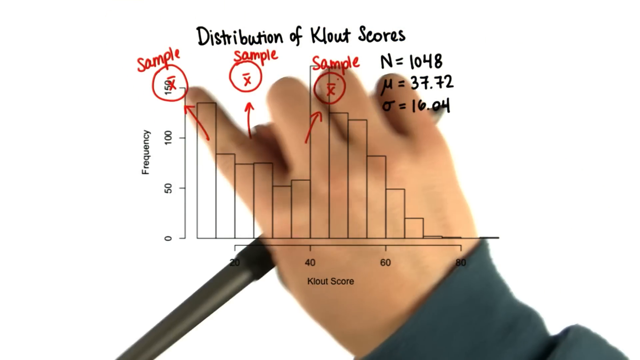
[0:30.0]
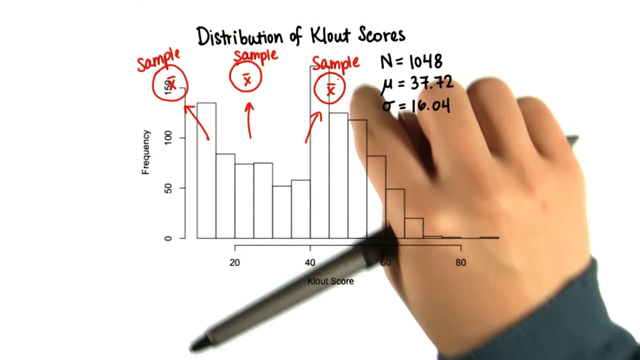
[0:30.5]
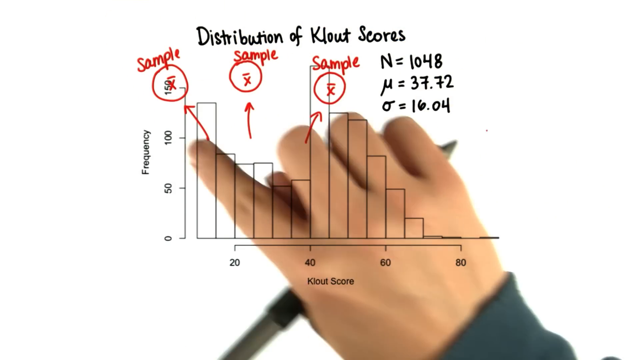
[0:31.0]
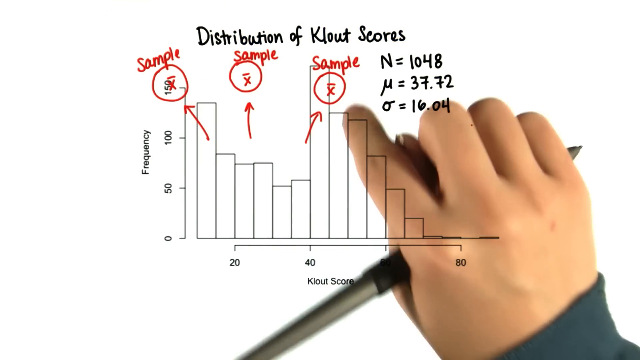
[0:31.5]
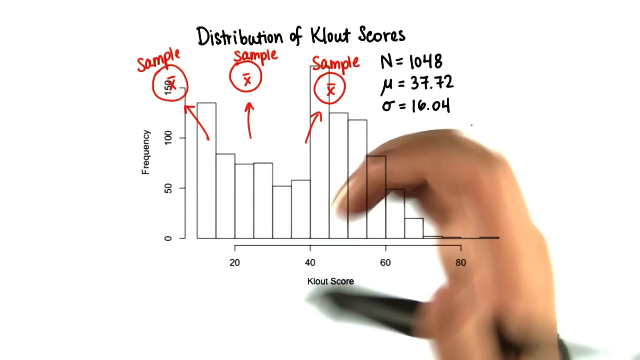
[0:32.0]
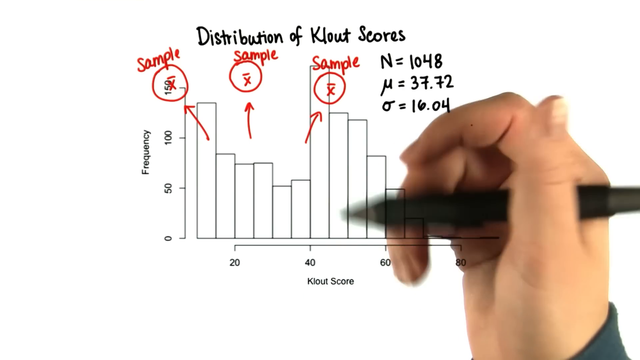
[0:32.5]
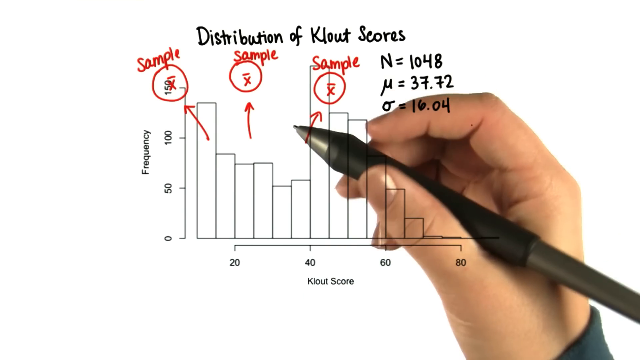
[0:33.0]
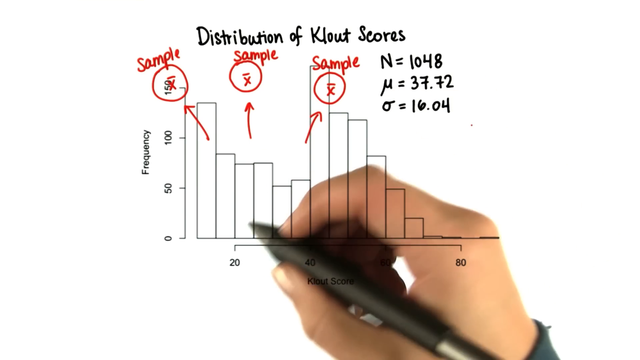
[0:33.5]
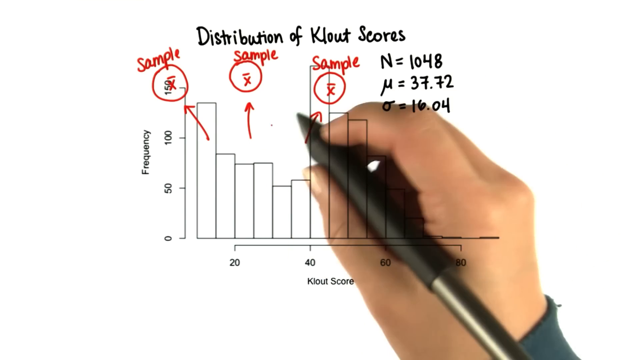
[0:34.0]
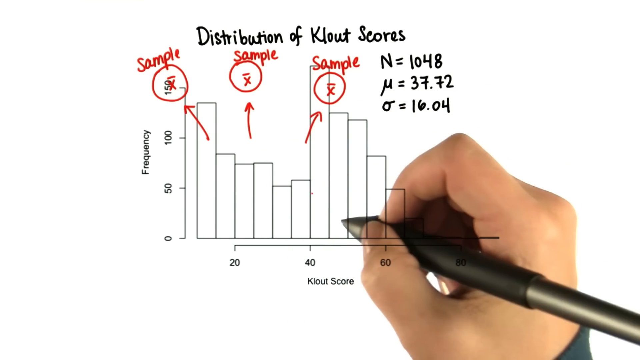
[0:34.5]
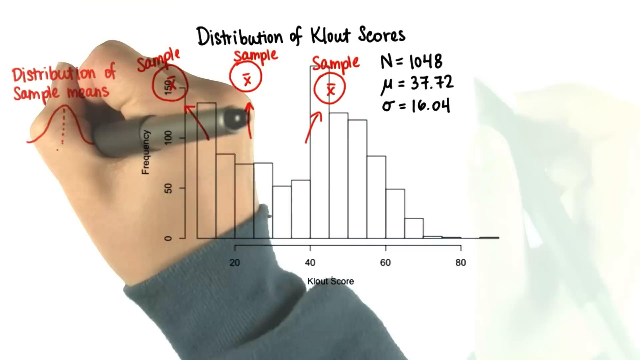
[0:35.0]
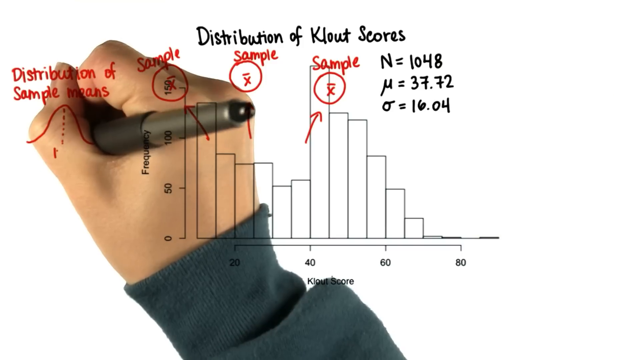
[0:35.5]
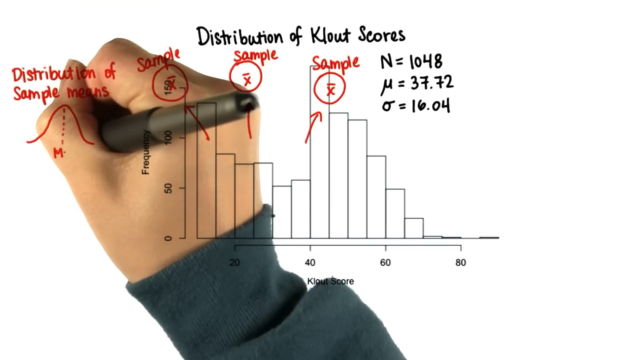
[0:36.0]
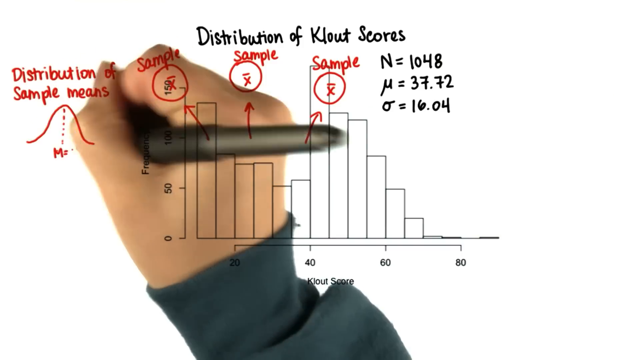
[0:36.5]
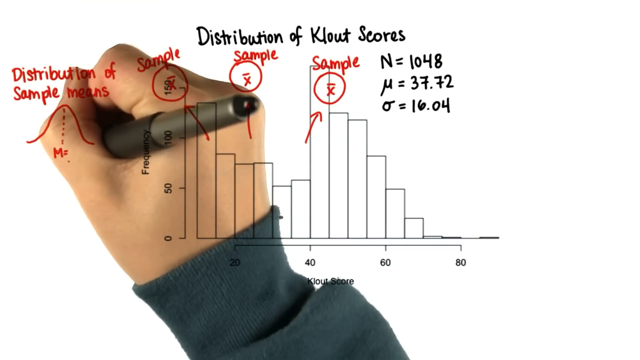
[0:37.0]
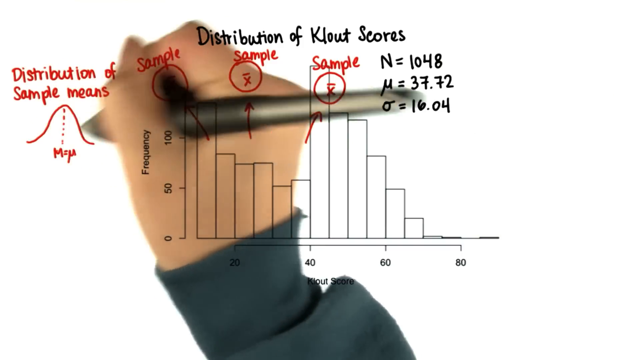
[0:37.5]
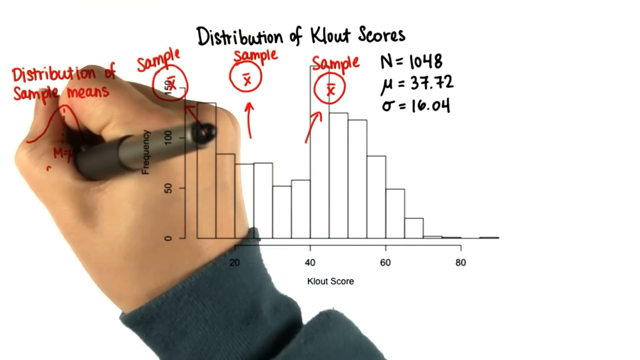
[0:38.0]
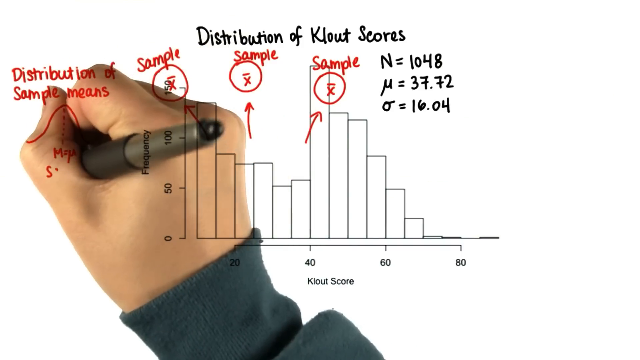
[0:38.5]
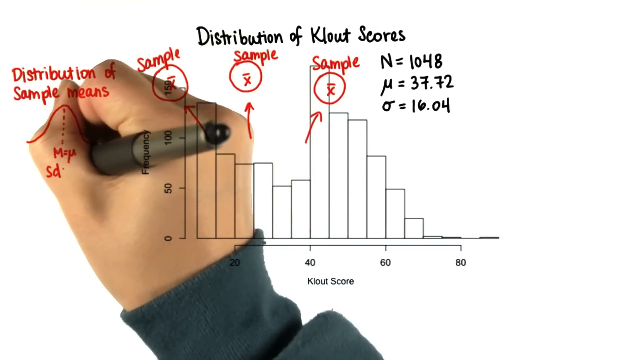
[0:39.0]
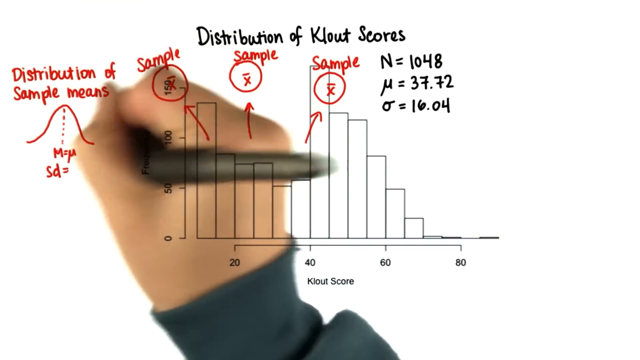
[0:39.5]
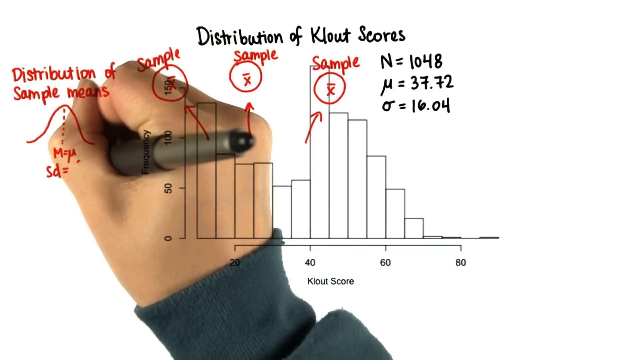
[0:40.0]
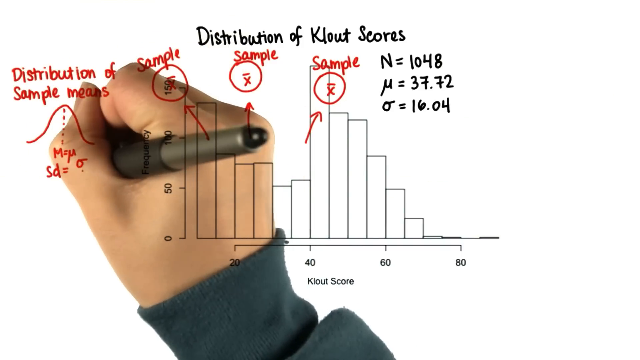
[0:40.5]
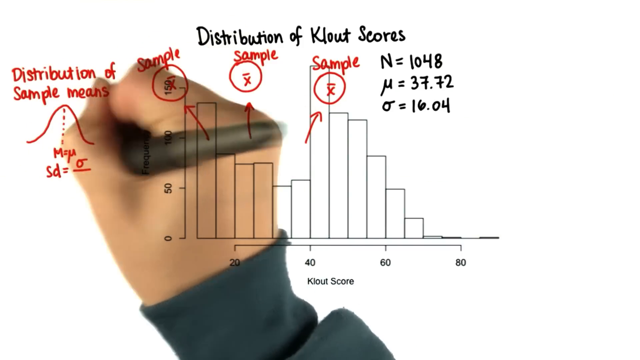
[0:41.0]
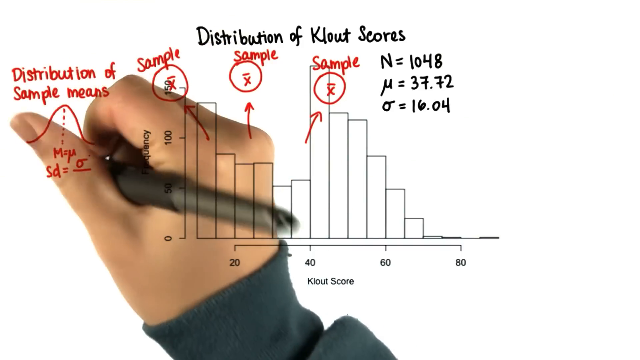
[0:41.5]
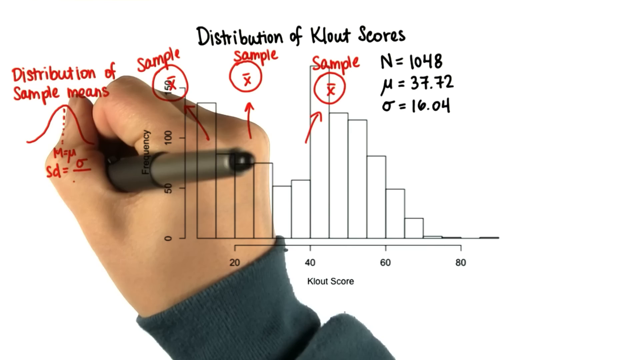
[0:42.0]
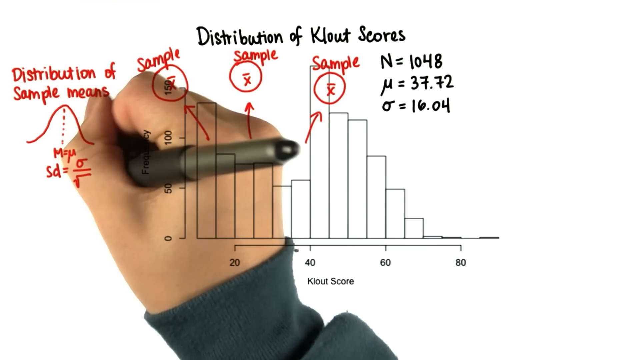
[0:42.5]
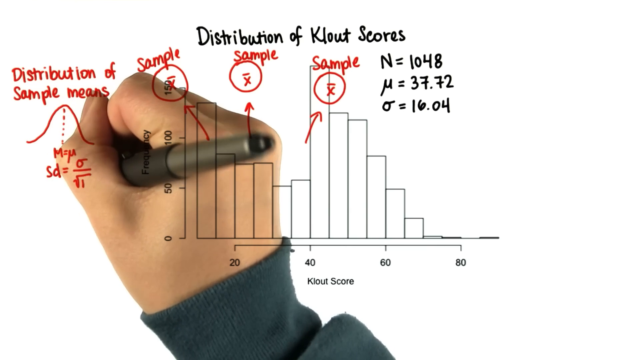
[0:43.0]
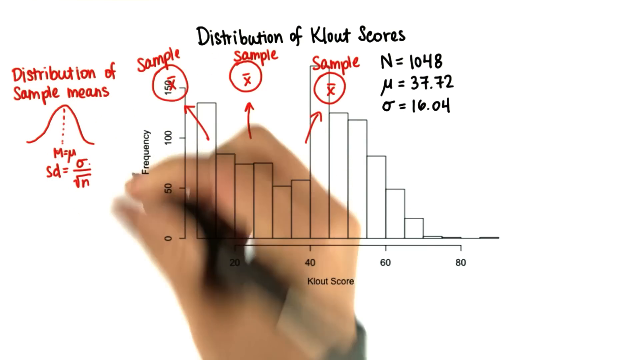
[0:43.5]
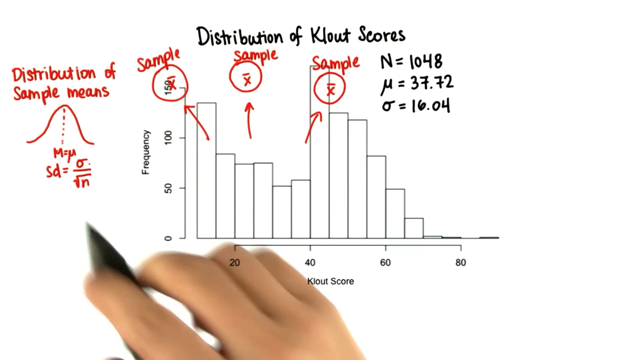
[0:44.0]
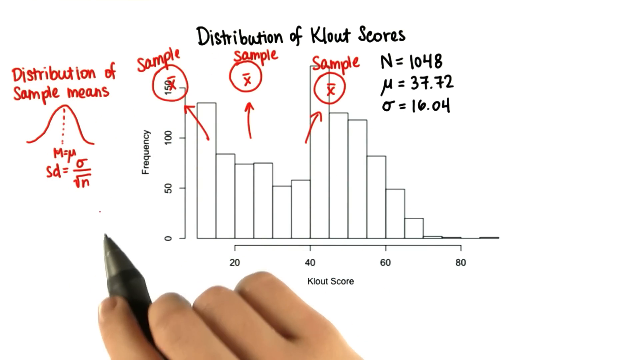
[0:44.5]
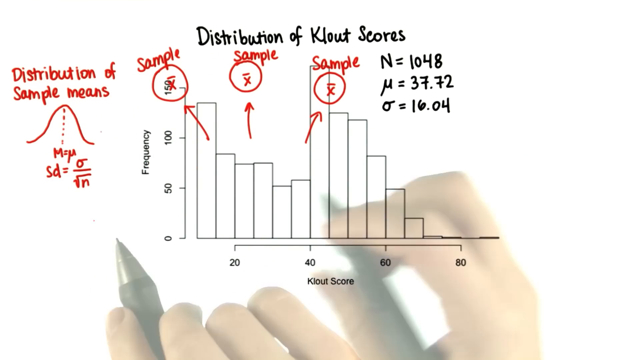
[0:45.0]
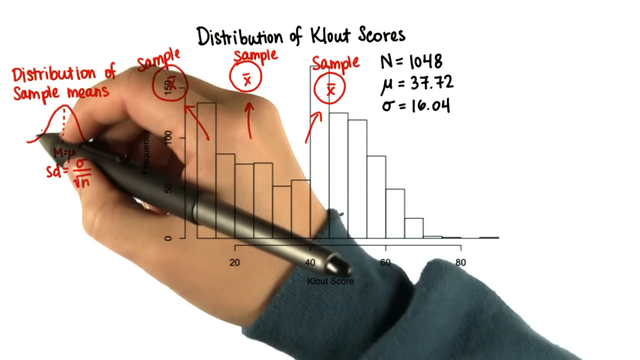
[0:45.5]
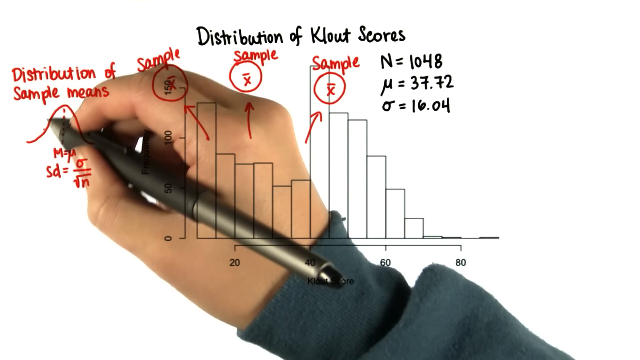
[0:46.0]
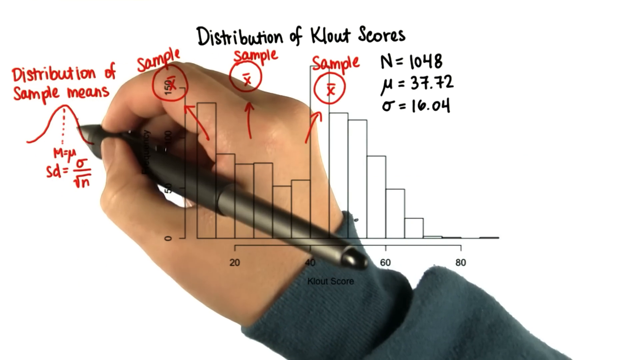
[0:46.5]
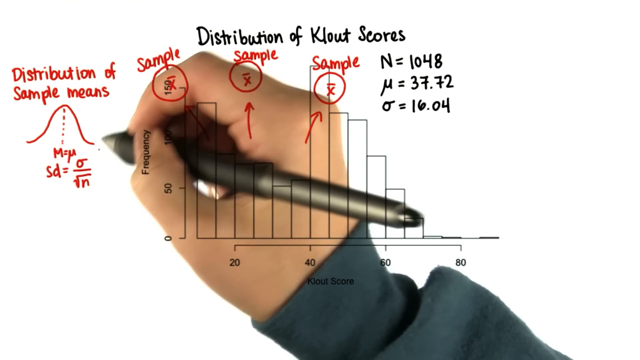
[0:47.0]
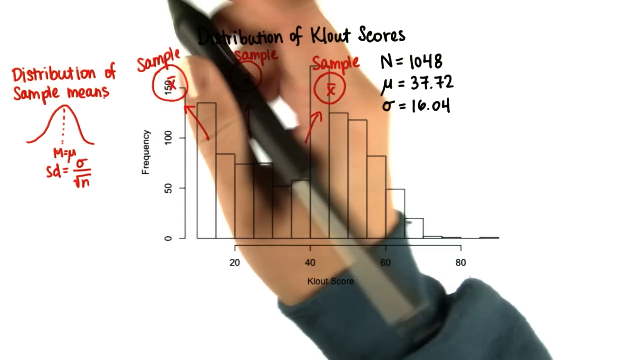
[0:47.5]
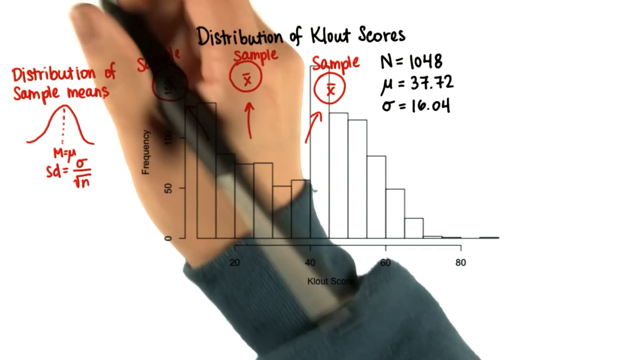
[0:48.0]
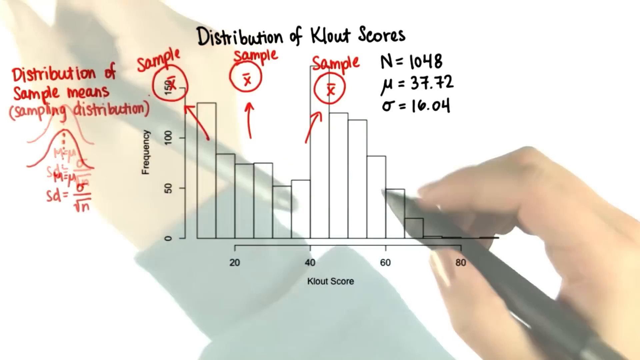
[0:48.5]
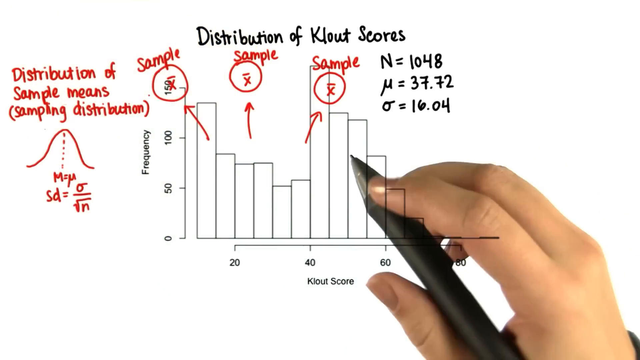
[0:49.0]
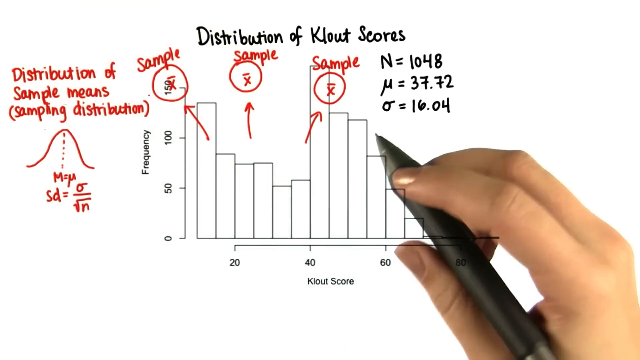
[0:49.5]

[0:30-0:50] The hand holds the writing utensil to the side without writing and uses a finger to make strange circular movements underneath the graph. She grabs the pen as if to write but moves all over without writing. The picture fades, the view goes to the left, and she starts writing, still in red, holding the pen like a fist. More of her shirt is visible: a long-sleeve green top, possibly of sweatshirt material. All the way to the left she writes "distribution of sample means" and draws a small bell graph that starts low, goes high and comes low again. From the middle of the bell graph she draws separated lines going down and writes something beginning with an m, unclear but possibly "median." She writes "sd =" followed by an O with a line to the side divided by the square. She moves her hand around as if about to write and retraces the bell graph. The picture fades out and back in, and she adds in parentheses "sampling distributions" to "distribution of sample means," underneath it, all in red.